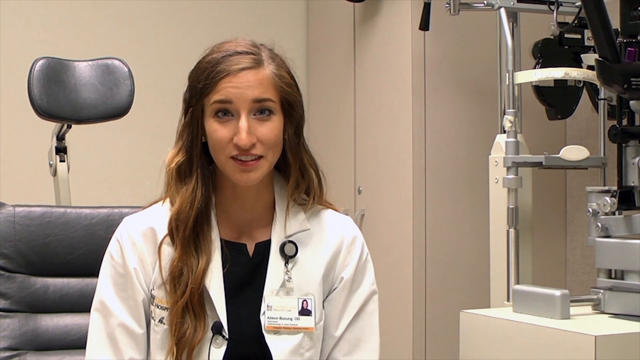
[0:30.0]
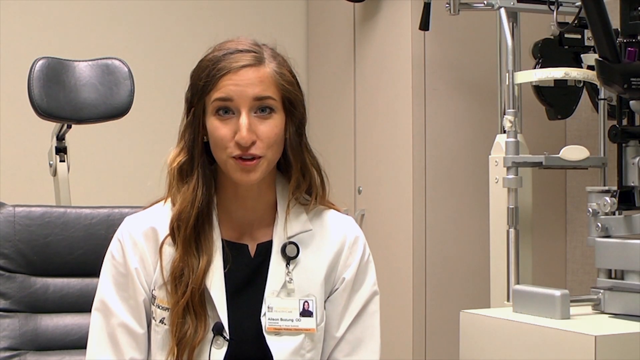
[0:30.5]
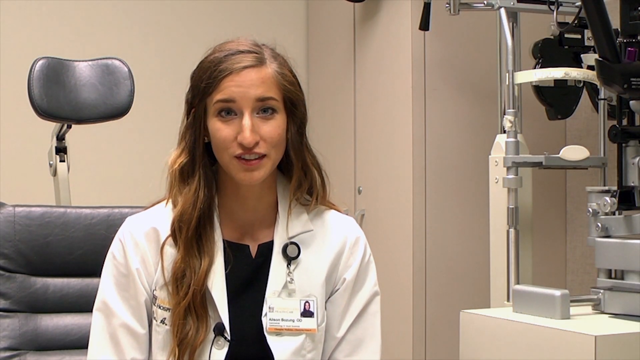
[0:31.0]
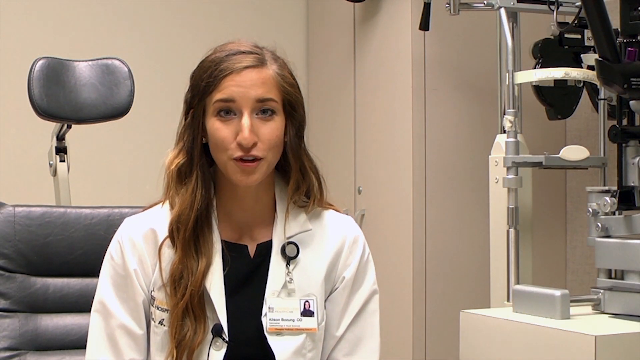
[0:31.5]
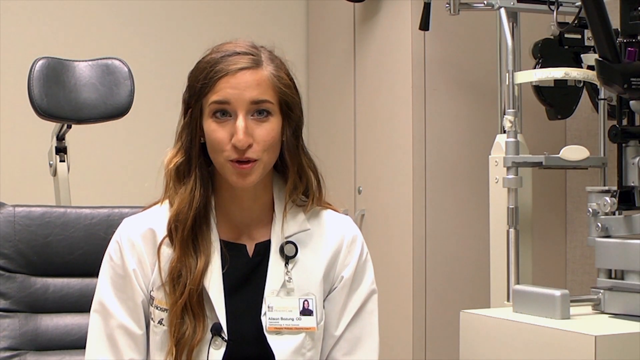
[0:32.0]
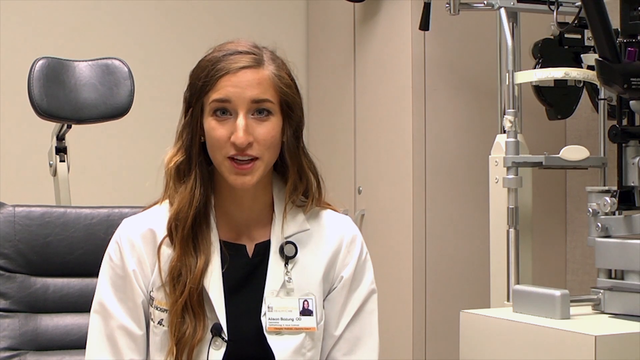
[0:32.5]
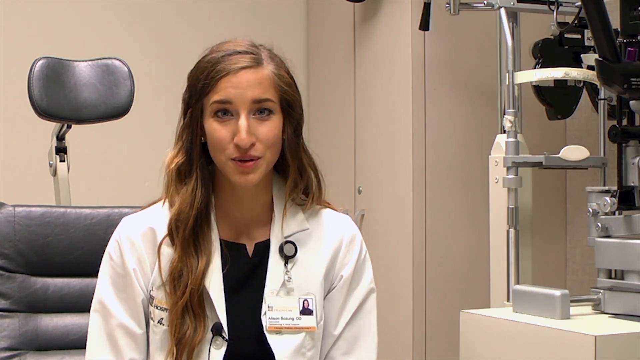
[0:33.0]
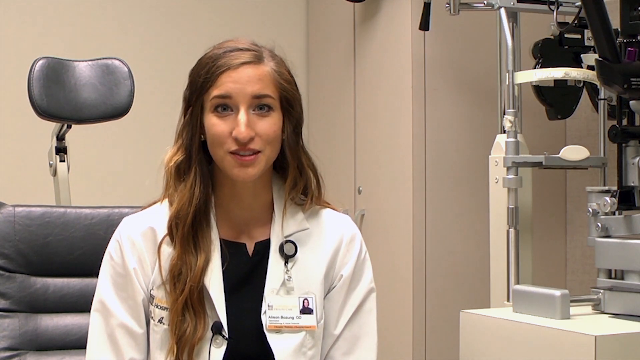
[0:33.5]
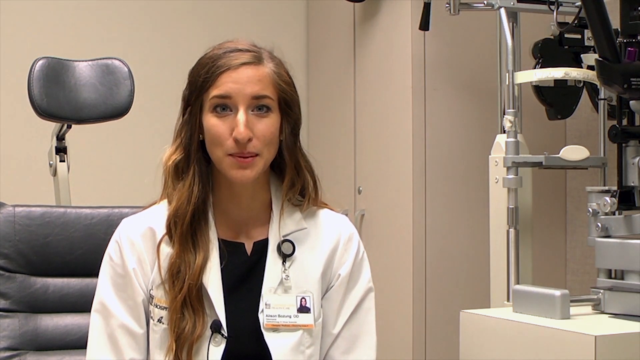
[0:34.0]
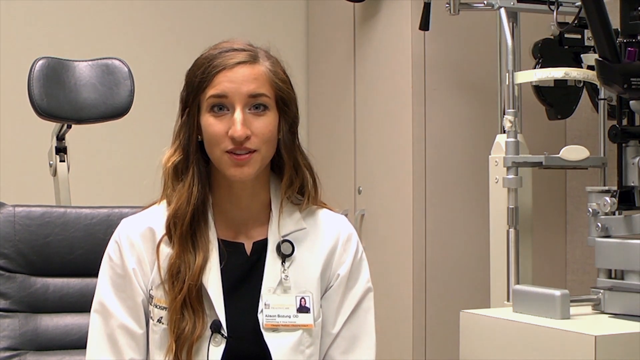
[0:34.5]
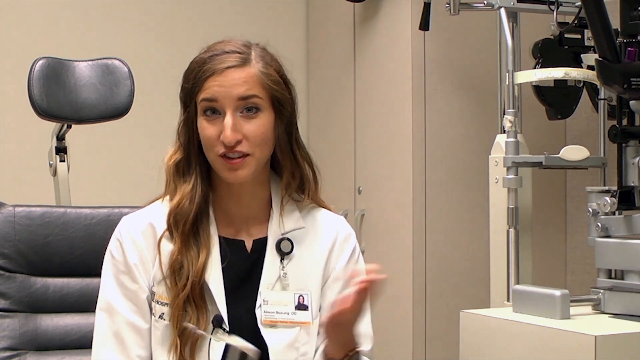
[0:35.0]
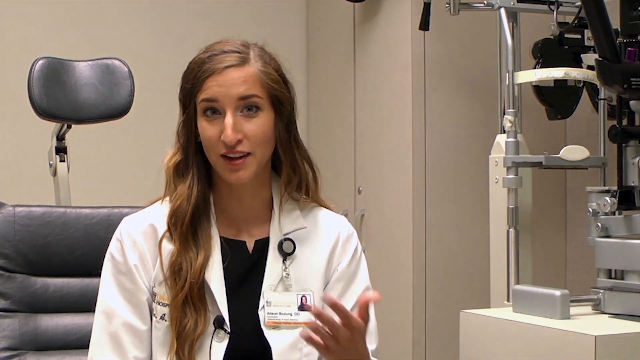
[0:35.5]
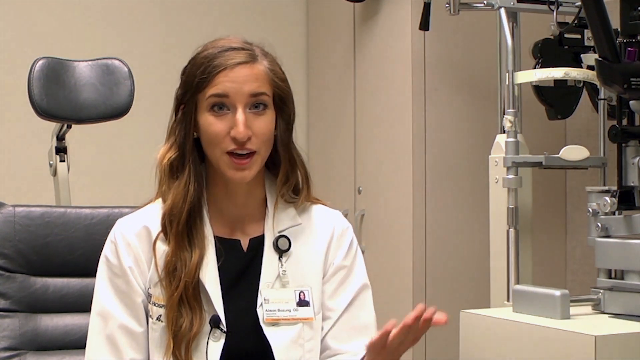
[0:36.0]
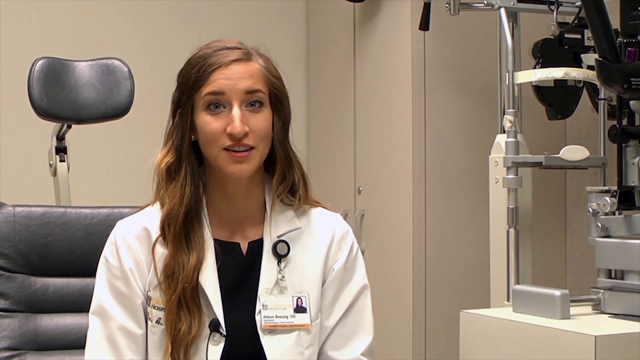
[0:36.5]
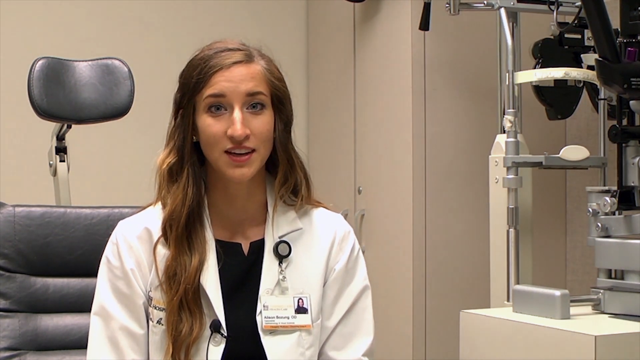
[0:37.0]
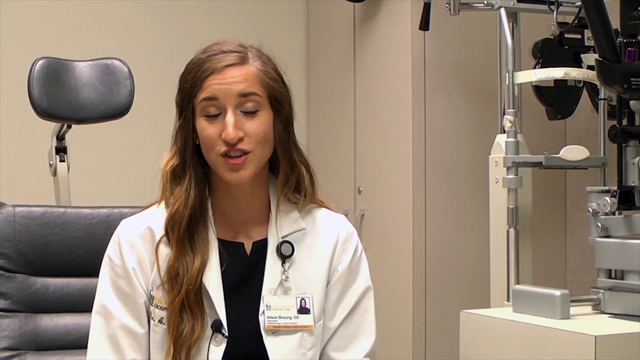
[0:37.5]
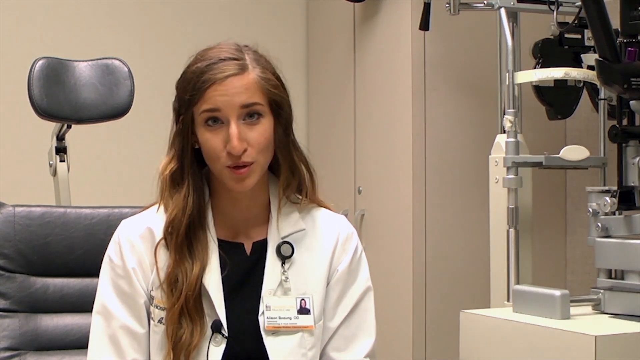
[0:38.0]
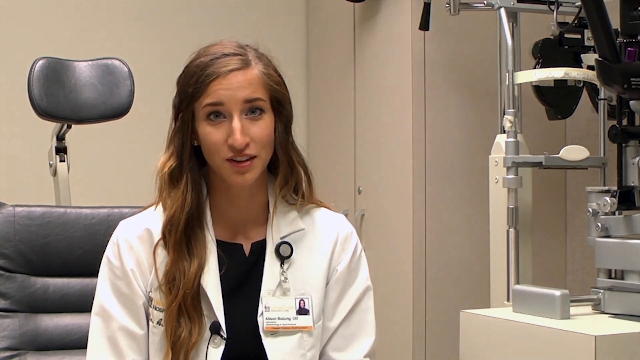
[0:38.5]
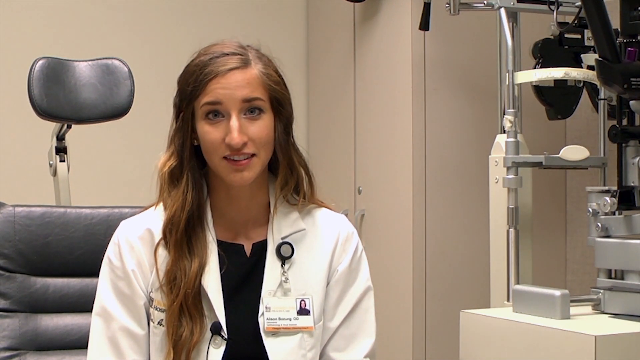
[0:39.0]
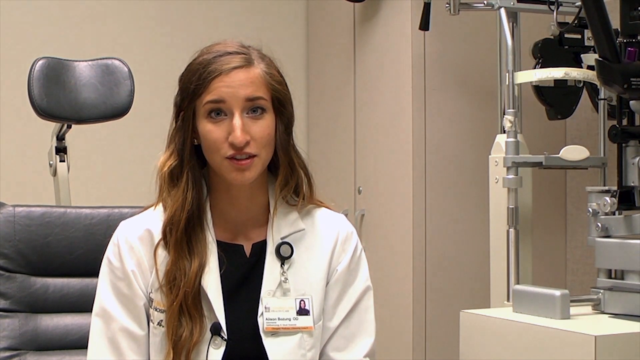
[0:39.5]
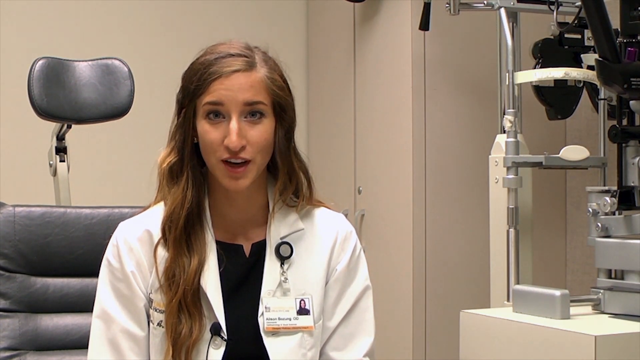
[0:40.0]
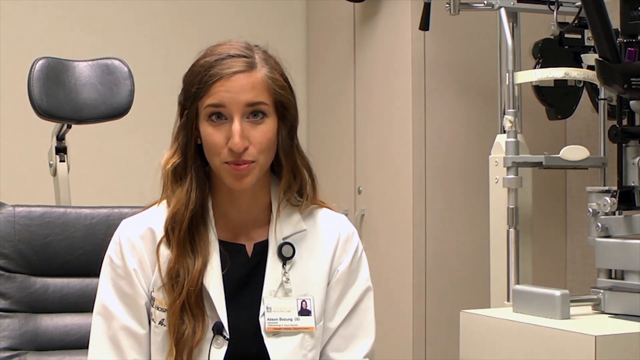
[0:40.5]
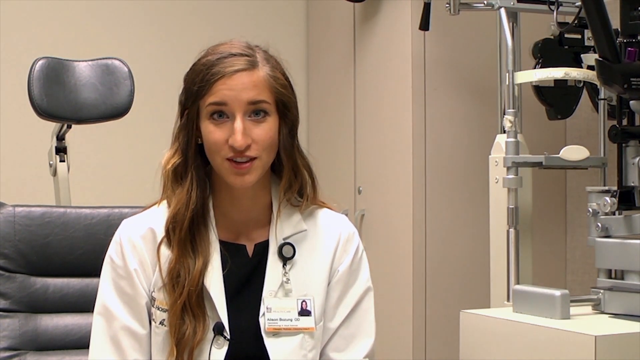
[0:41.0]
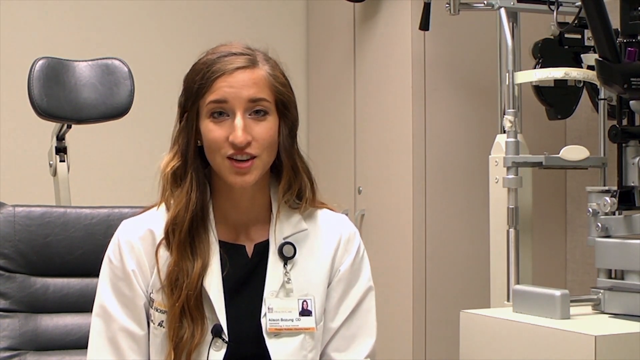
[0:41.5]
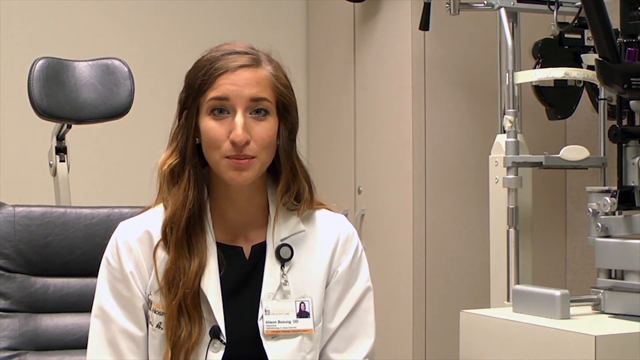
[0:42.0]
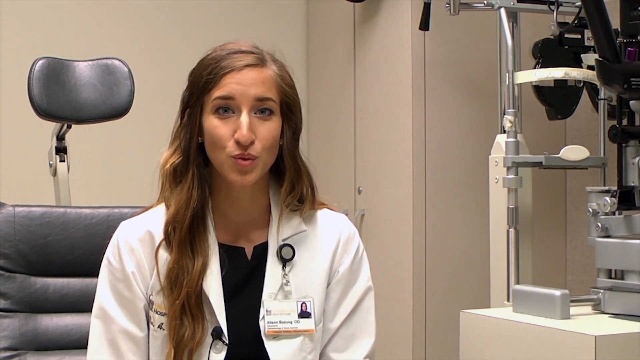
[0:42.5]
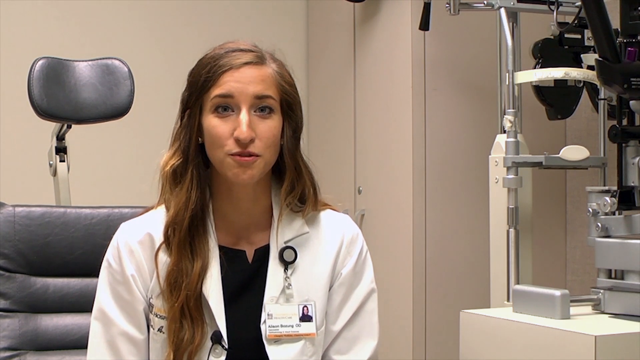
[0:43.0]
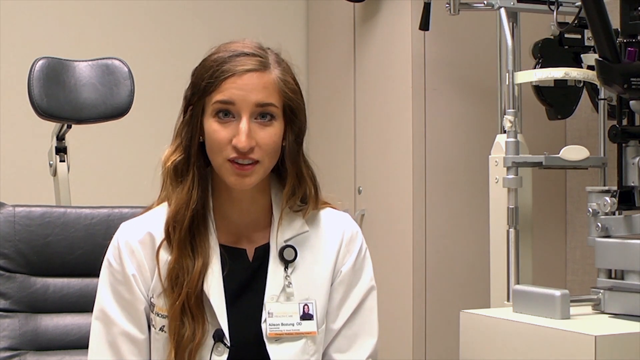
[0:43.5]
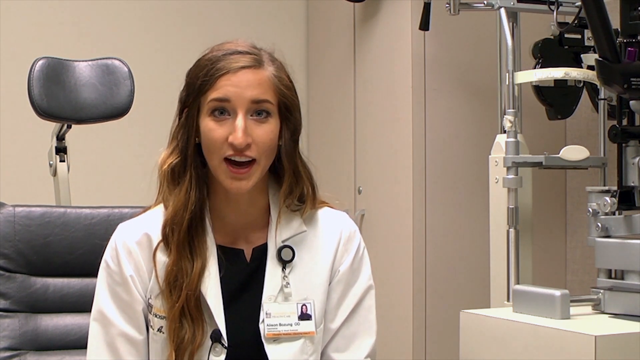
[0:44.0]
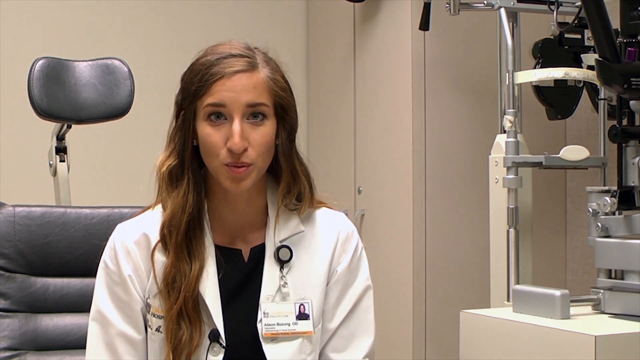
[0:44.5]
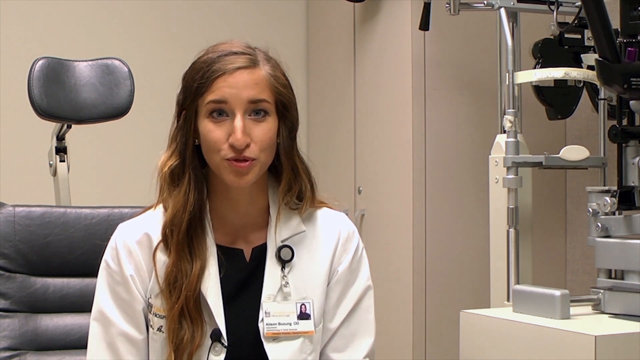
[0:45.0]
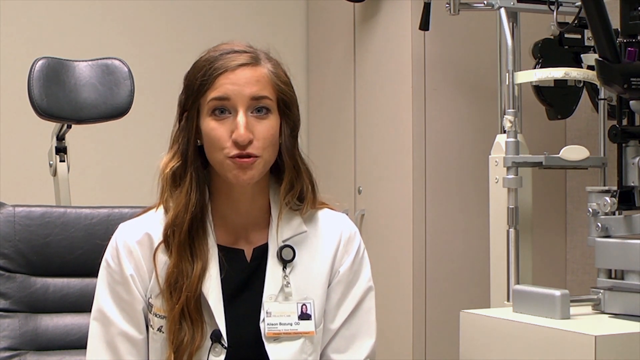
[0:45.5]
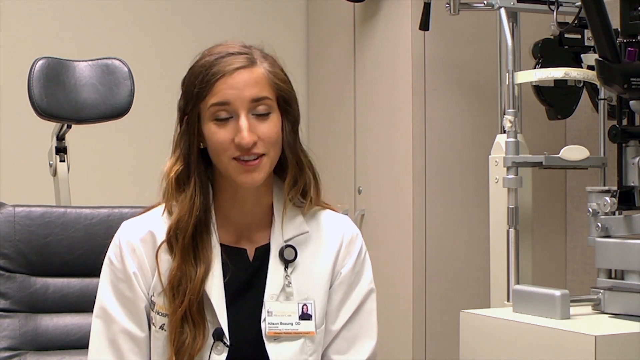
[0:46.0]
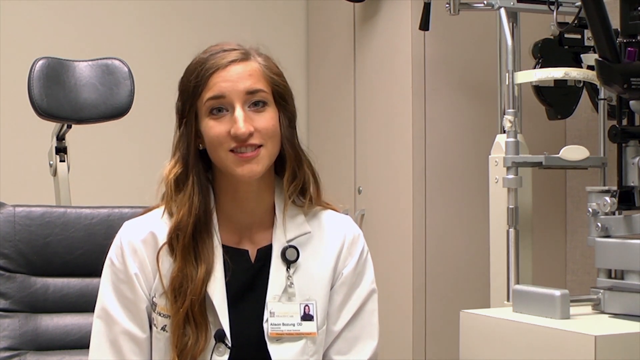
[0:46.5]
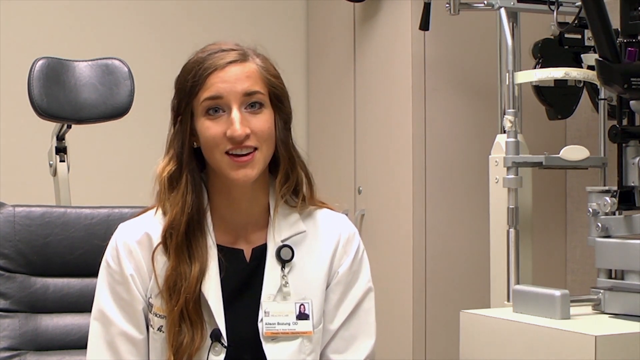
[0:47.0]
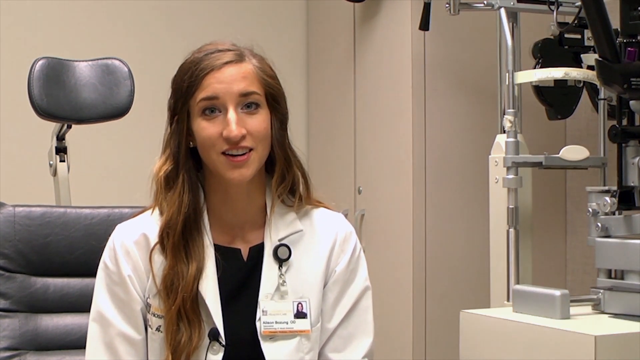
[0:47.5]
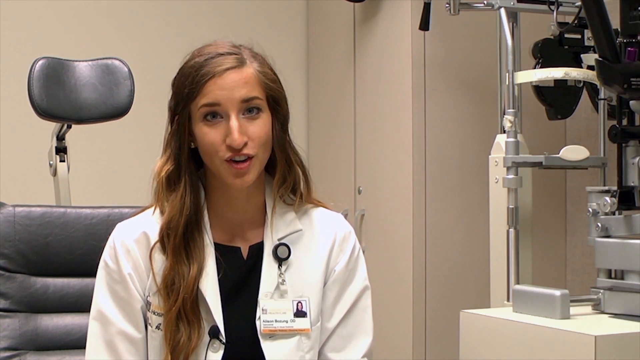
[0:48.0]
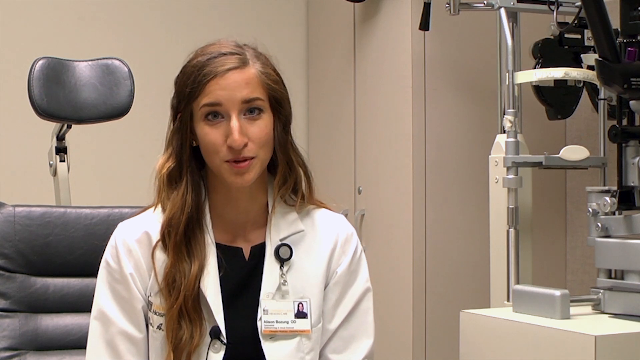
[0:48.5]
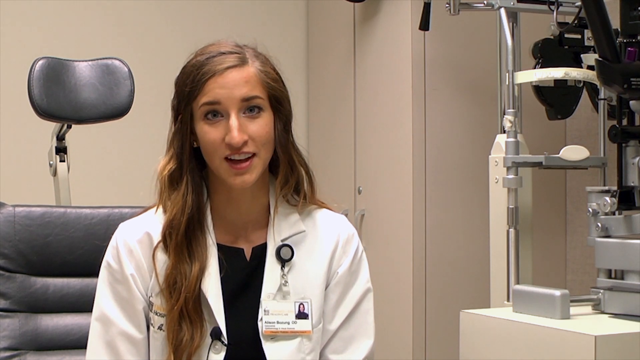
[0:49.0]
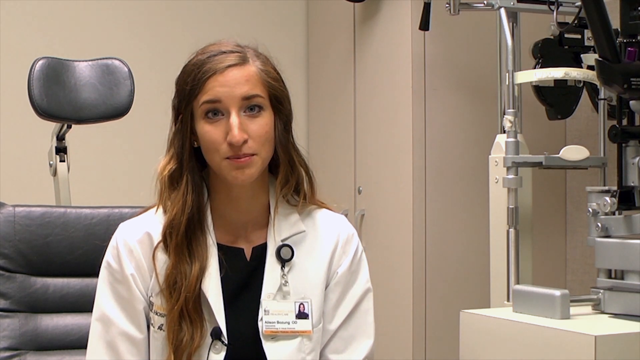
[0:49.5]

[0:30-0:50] A female ophthalmologist speaks to the camera from a seated position in an exam room in her practice. The room is light tan. She is seated in an exam chair of black leather and silver metal, and to her right is black and silver ophthalmic exam equipment. She has long, wavy, light brown hair, blue eyes and a fairly large nose, and wears a white lab coat with a black blouse. Looking directly at the camera, she smiles as she talks and gestures slightly with her right hand. Her lanyard and ID are connected to her upper left lapel by a round clip that is black around the edges and gray in the center. Her ID badge is white, with a picture of her in the upper right corner and text with her name and credentials beneath it toward the bottom left and center. On the right side of her lab coat is embroidery that seems to indicate the ophthalmology practice she works at.